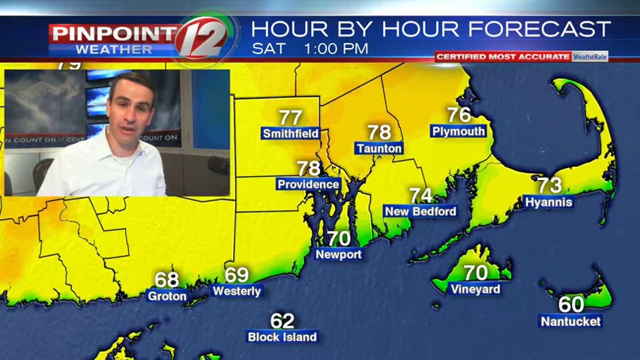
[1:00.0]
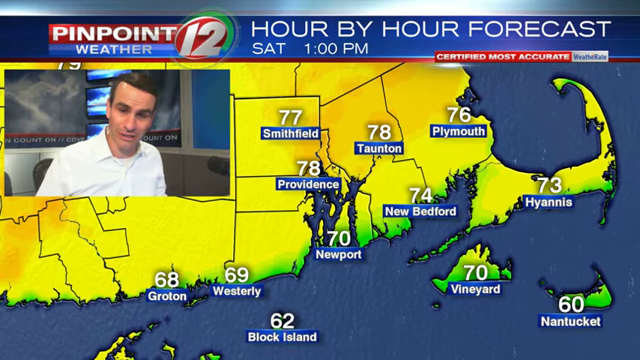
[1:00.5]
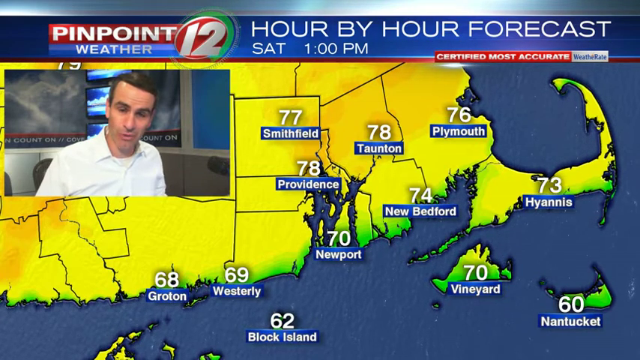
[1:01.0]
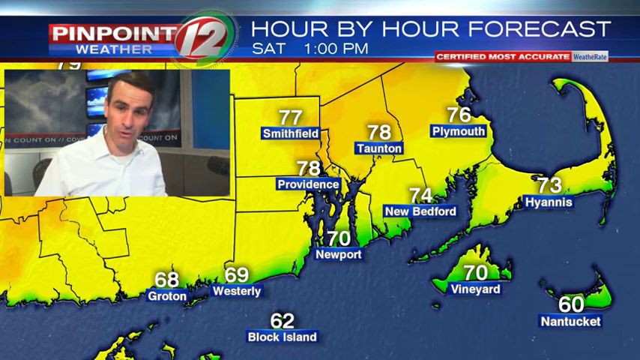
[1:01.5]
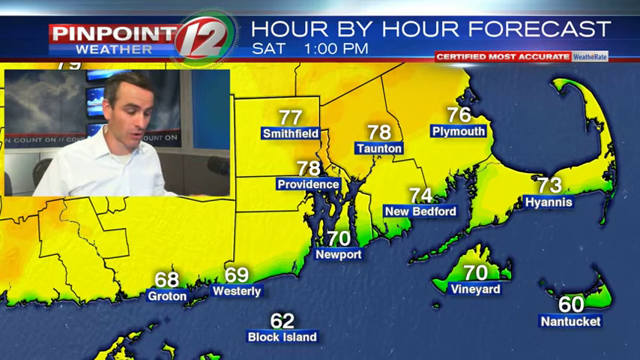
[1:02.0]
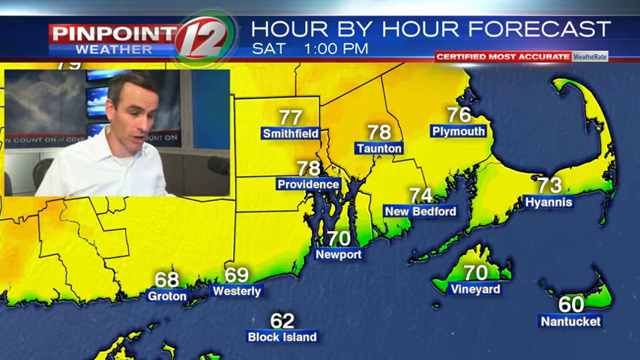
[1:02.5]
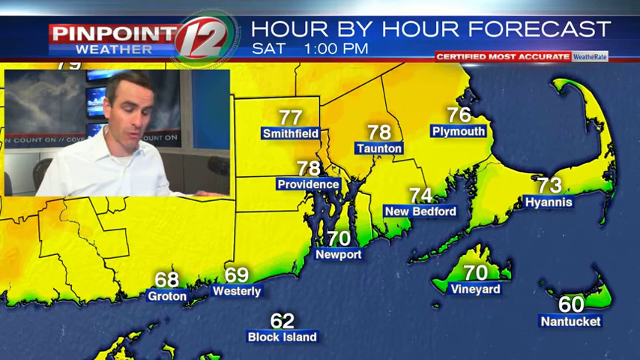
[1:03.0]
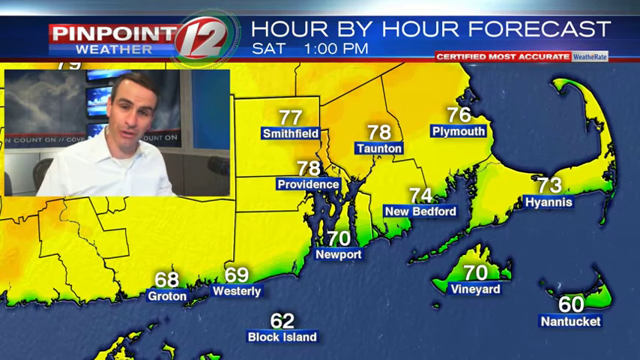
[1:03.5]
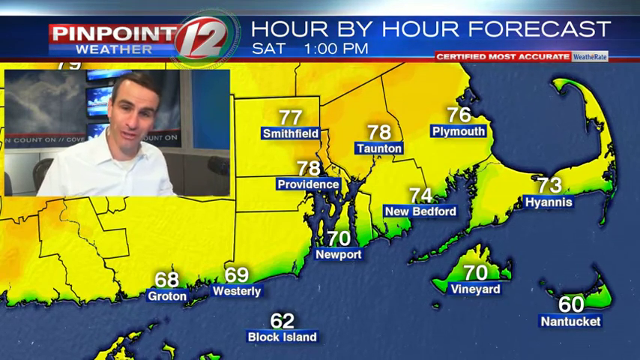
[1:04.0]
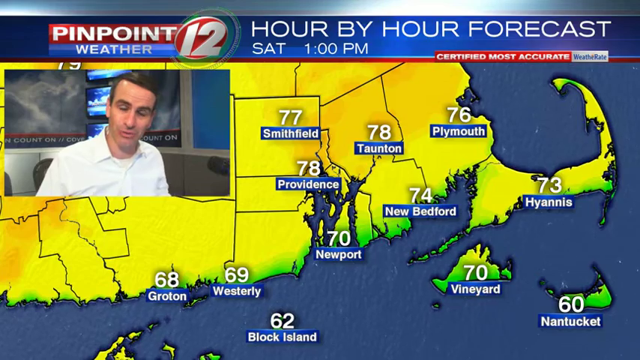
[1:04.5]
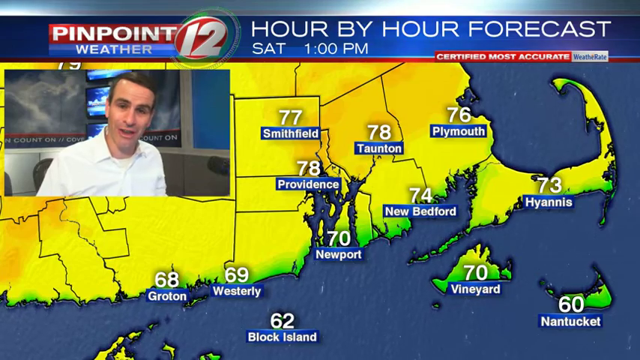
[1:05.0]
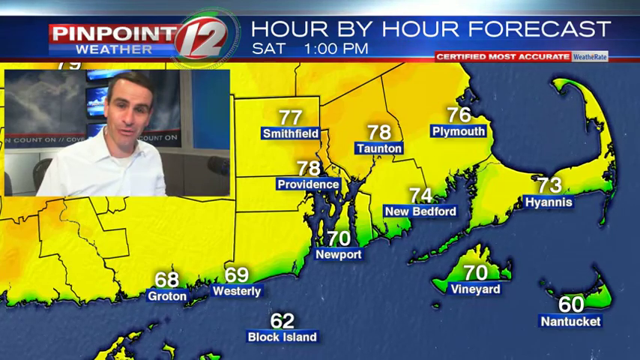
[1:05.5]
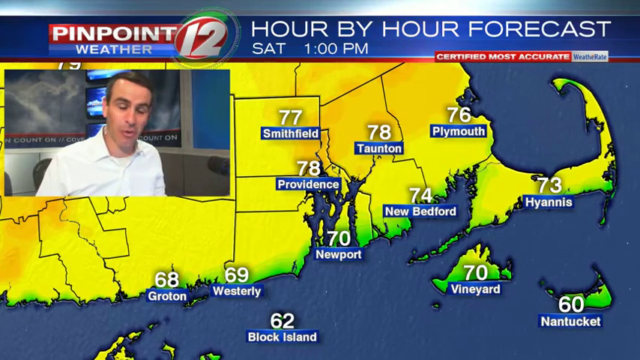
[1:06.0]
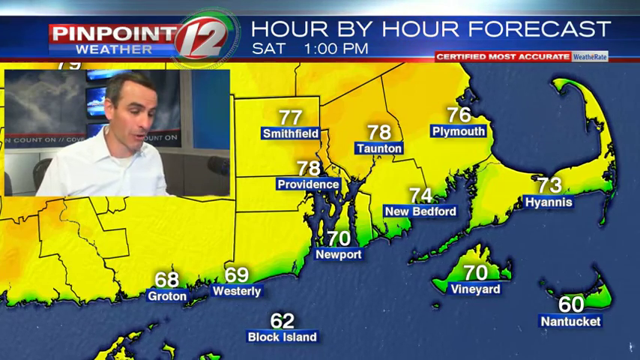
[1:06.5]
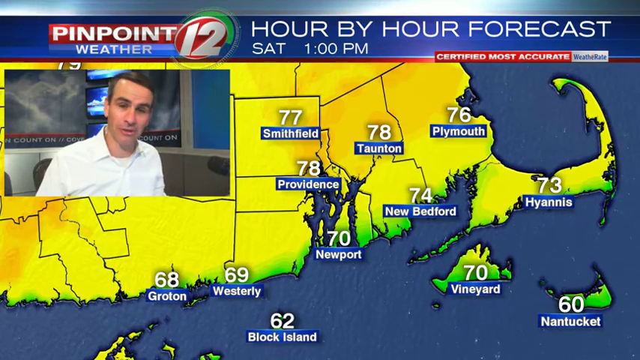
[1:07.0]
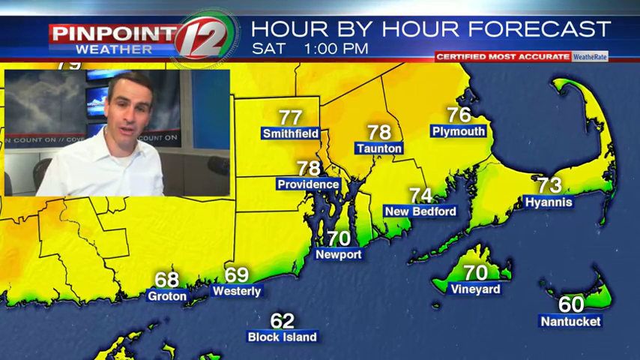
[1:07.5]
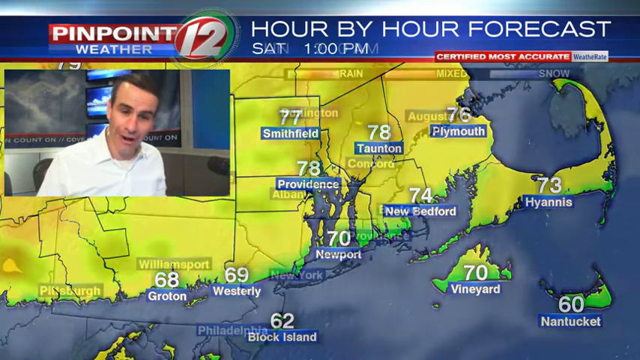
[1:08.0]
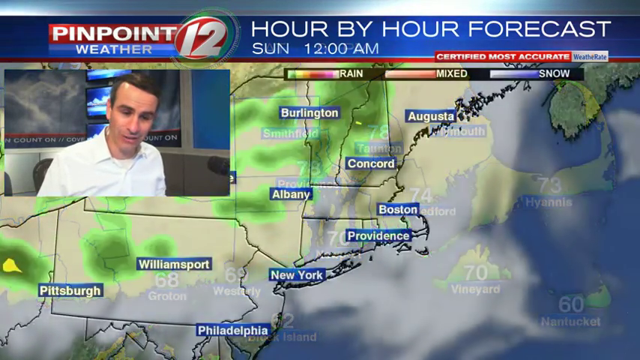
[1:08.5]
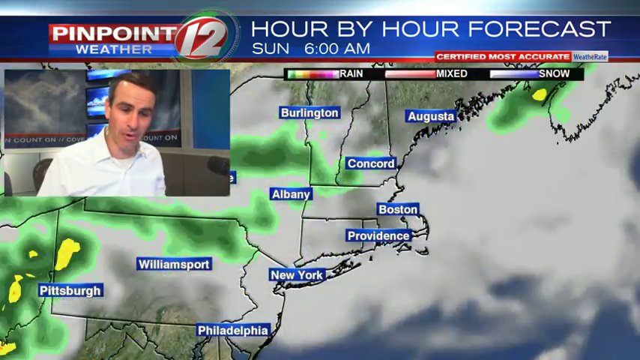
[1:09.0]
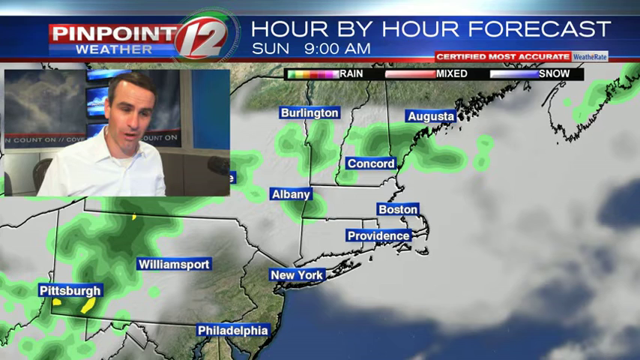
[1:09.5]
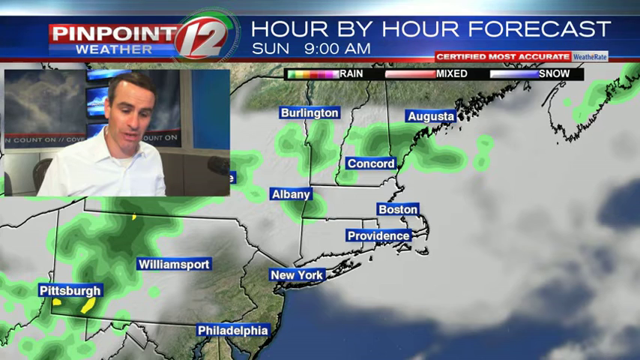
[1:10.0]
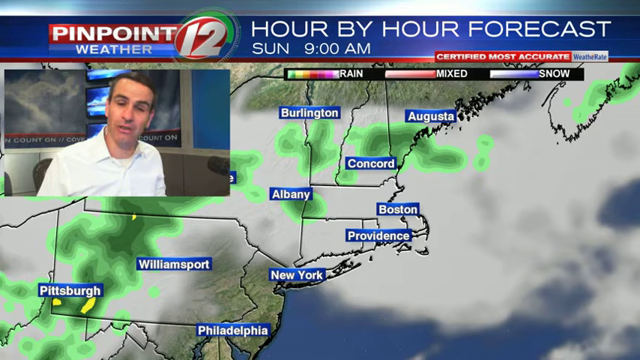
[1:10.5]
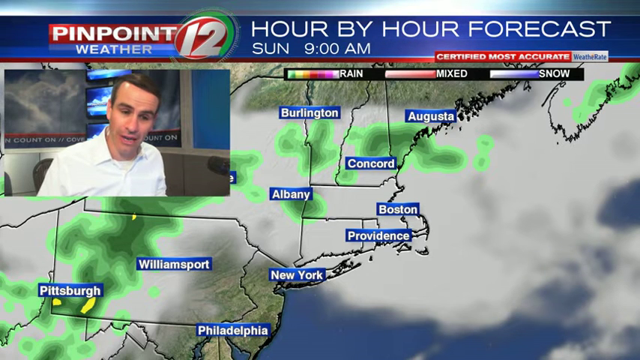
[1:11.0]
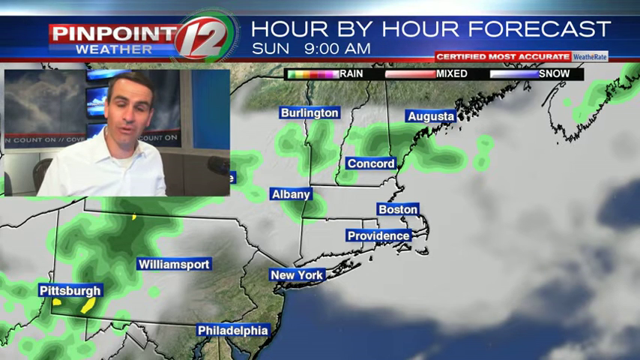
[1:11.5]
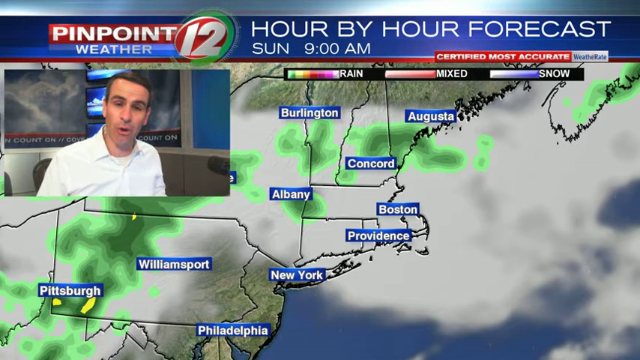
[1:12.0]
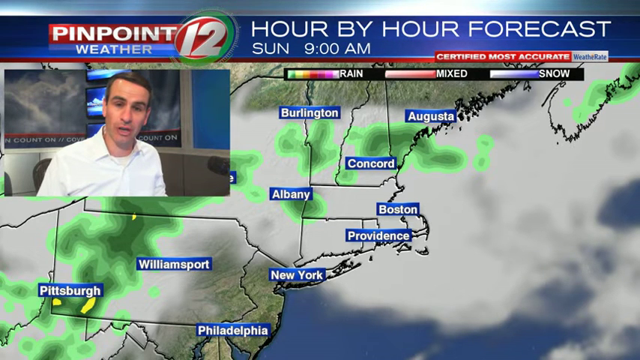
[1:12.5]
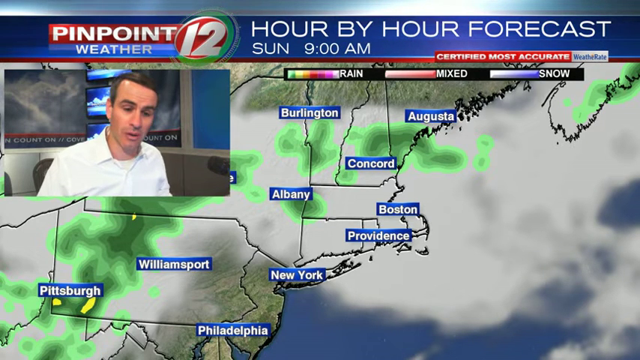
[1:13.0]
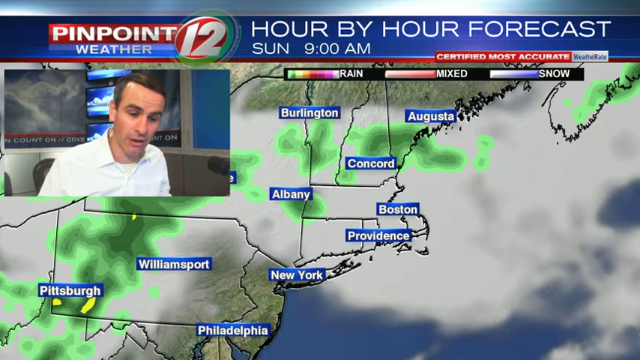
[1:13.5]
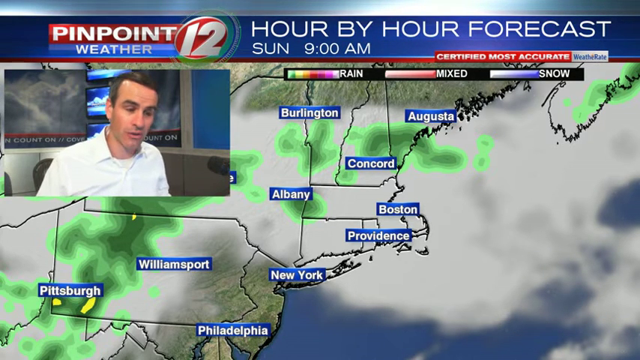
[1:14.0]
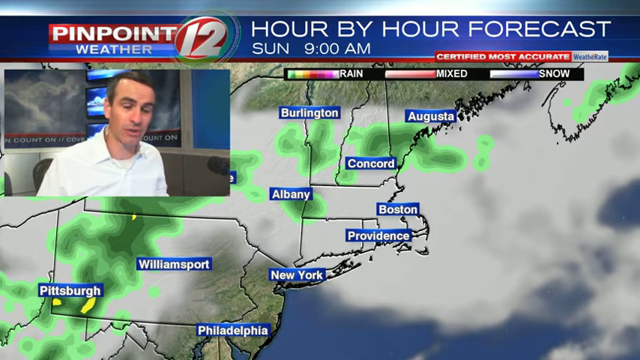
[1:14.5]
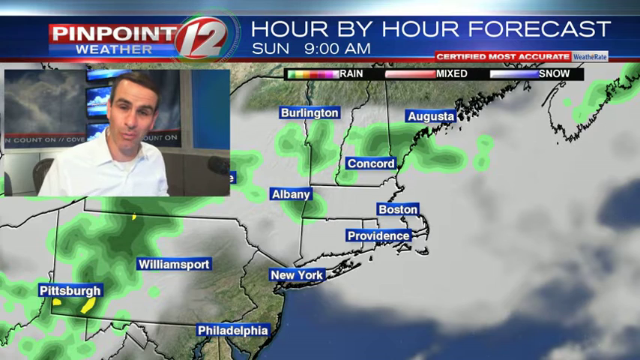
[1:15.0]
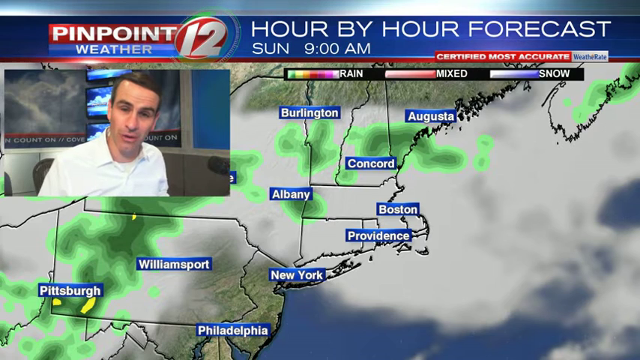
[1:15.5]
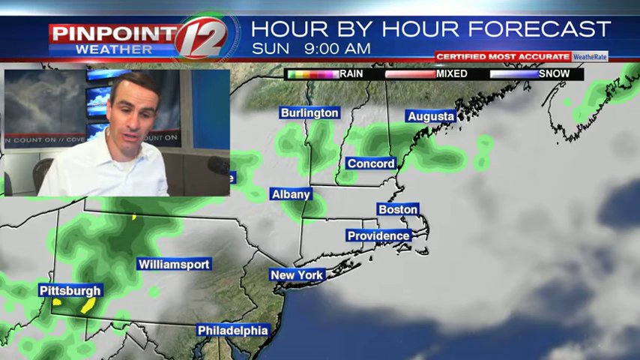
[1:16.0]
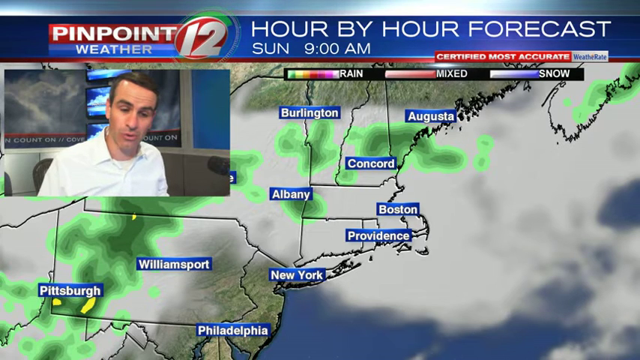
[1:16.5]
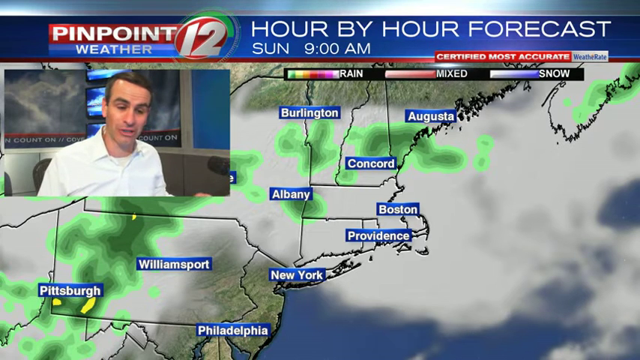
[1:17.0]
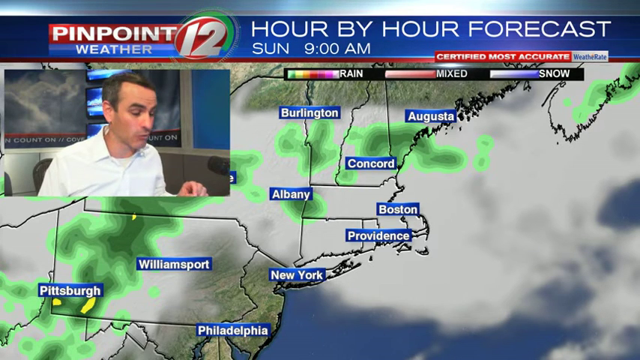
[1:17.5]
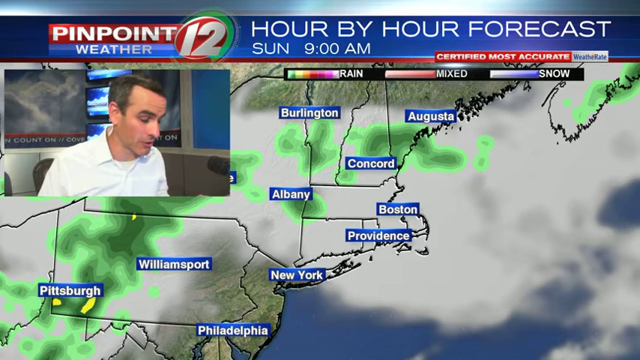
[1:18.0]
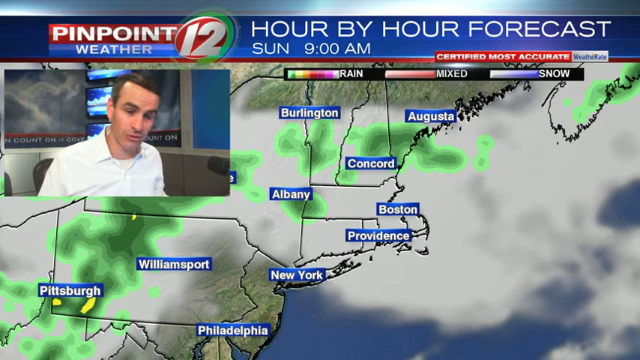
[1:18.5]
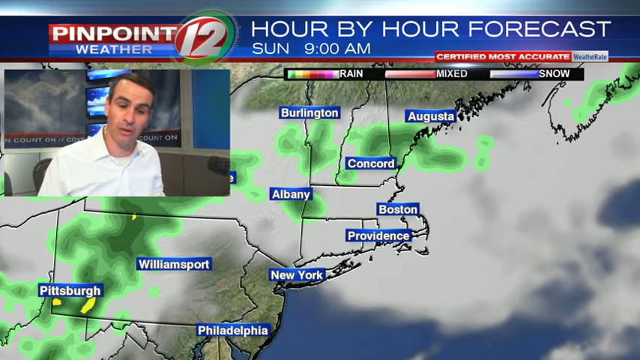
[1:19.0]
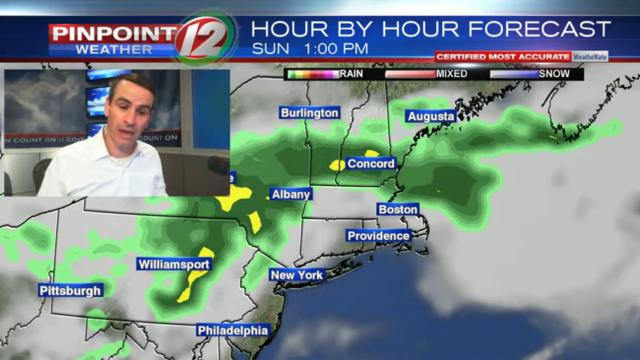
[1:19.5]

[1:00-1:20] The man presenting the weather seems concerned. He changes the image to a map showing possible rain across the cities, with a big system of clouds. A scale runs from green to white. Some cities are in a green area, while others are in a grey area, where rain is very probable. Snow is shown at a very low probability, and a mix of rain and snow at an extremely low probability. The map is an hour-by-hour forecast for Sunday at 9am, with rain possible in some places.